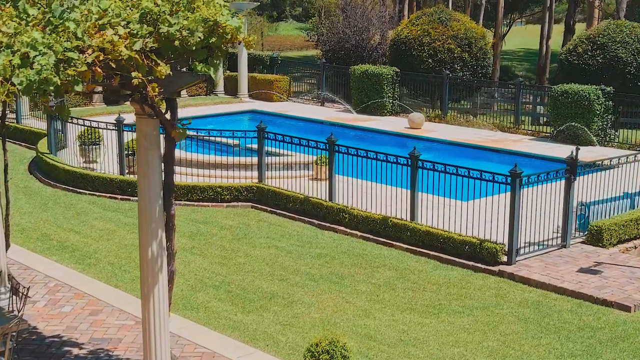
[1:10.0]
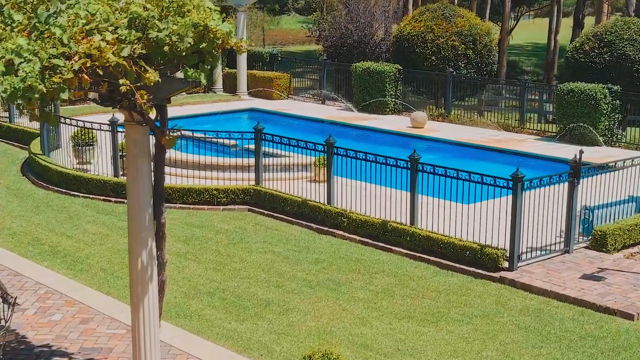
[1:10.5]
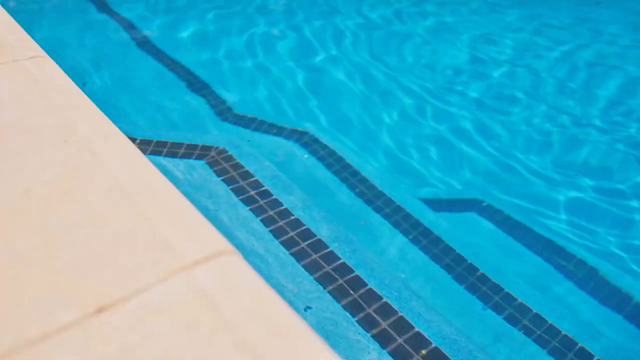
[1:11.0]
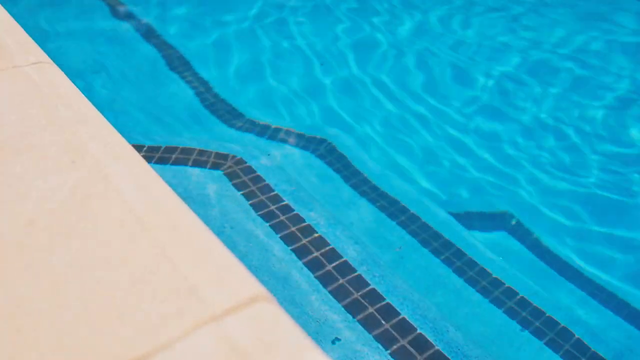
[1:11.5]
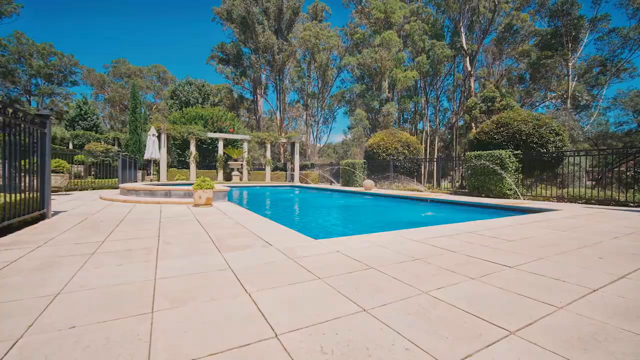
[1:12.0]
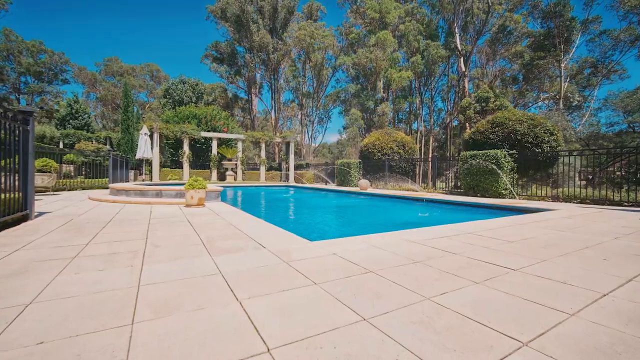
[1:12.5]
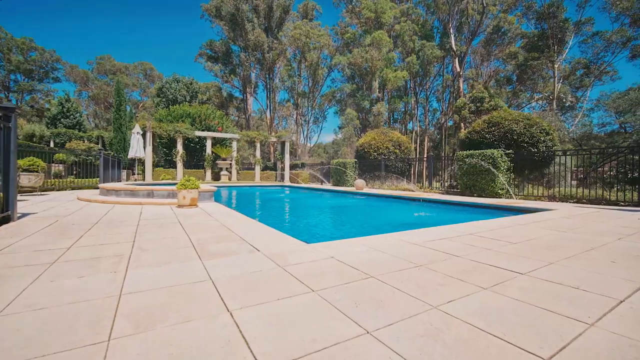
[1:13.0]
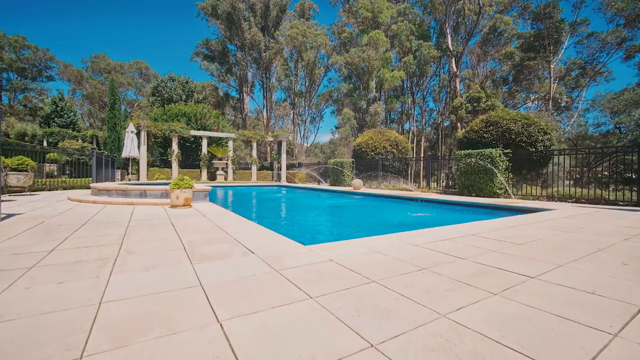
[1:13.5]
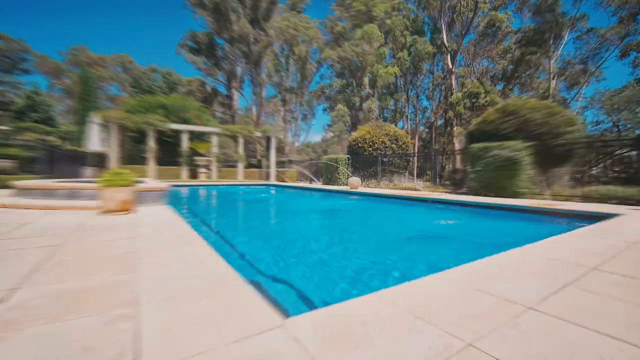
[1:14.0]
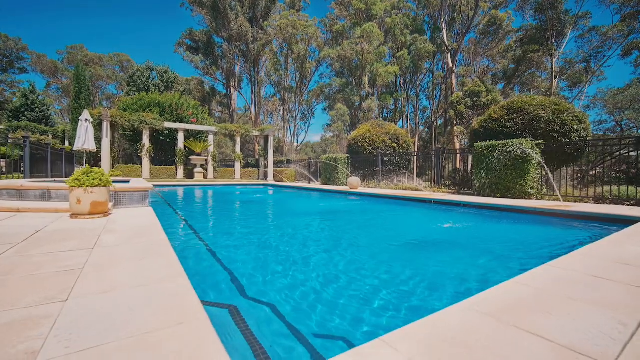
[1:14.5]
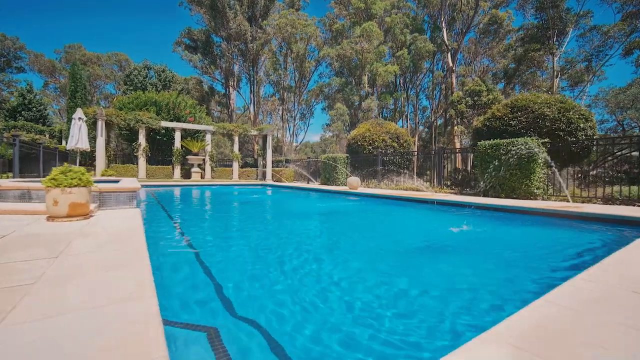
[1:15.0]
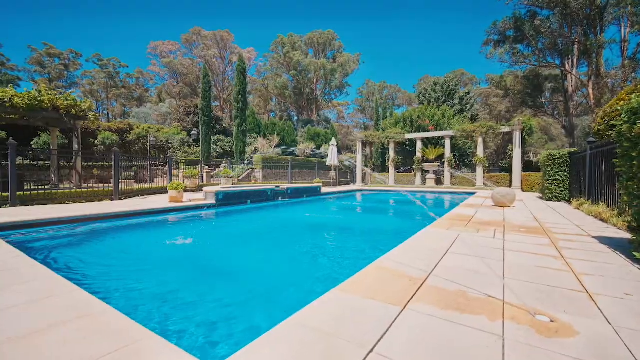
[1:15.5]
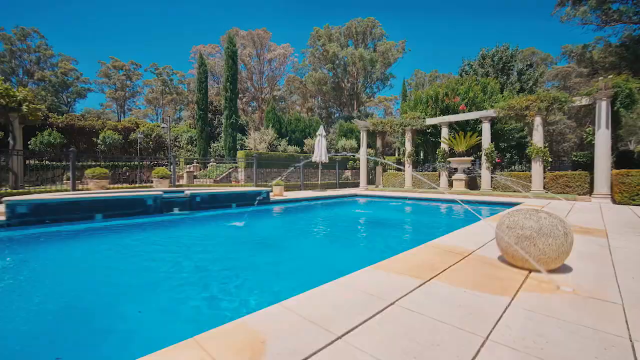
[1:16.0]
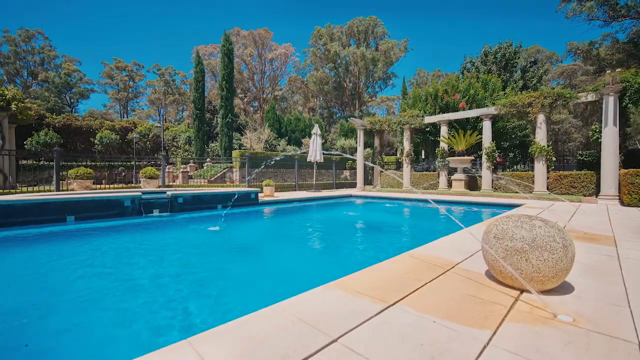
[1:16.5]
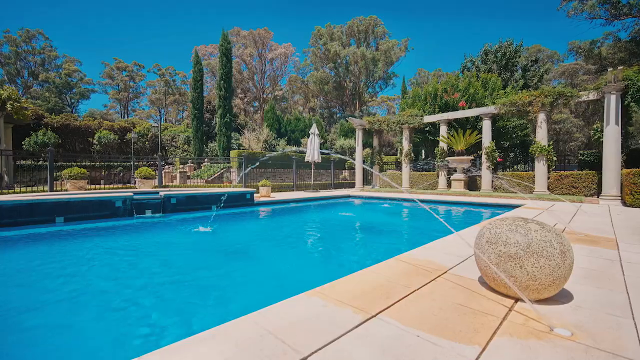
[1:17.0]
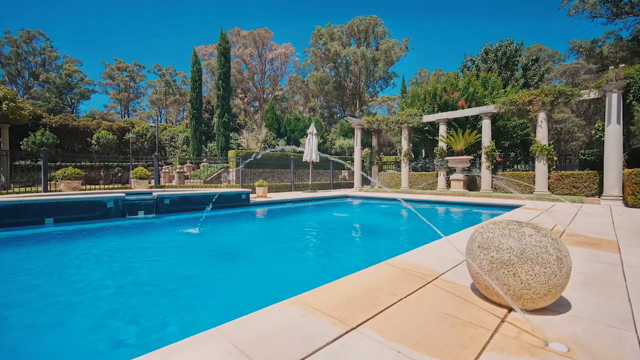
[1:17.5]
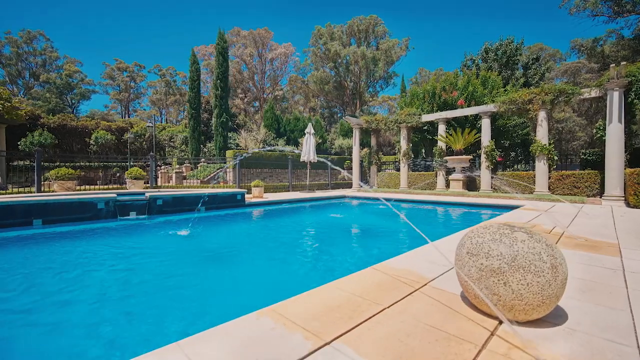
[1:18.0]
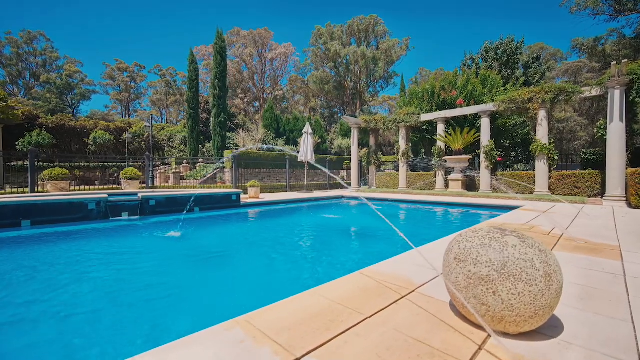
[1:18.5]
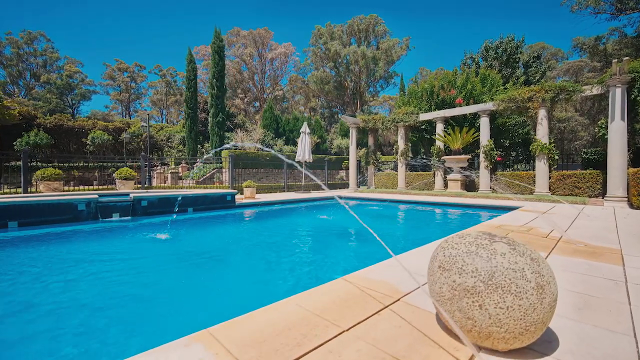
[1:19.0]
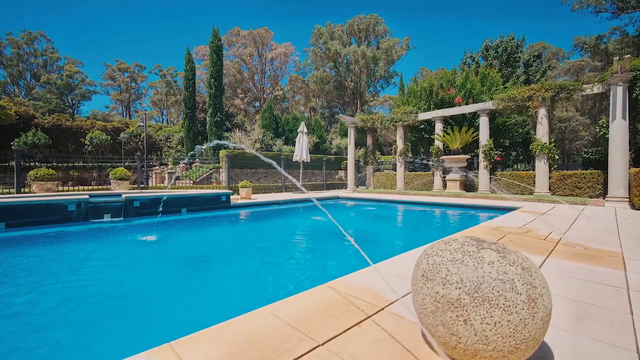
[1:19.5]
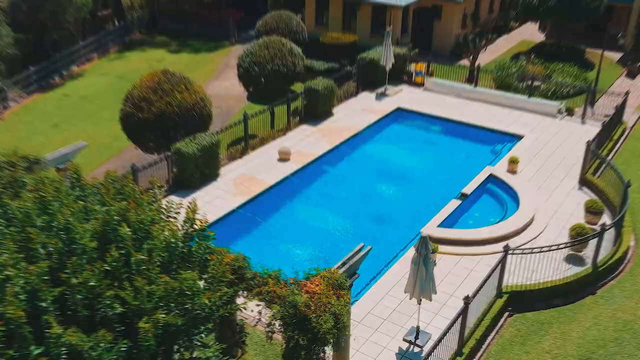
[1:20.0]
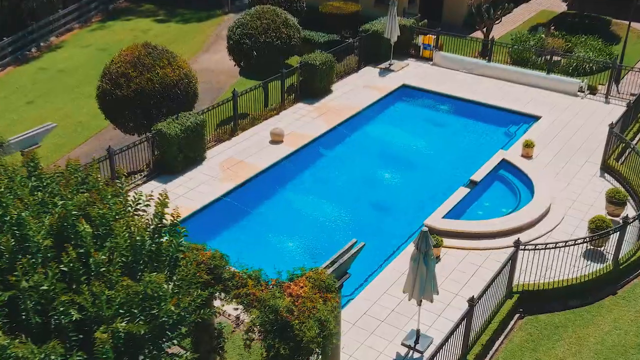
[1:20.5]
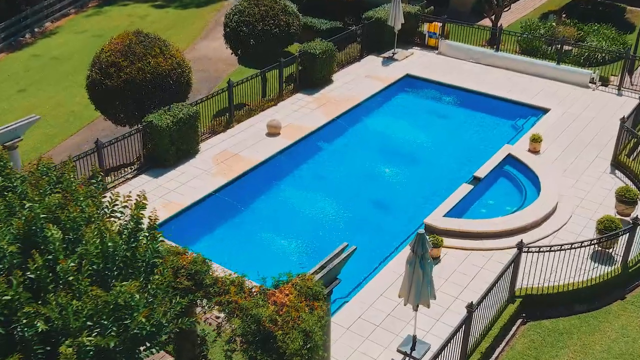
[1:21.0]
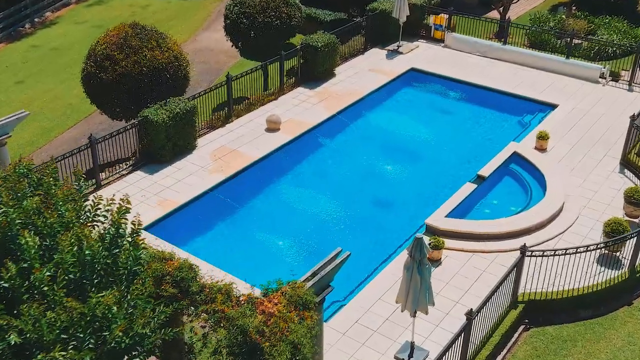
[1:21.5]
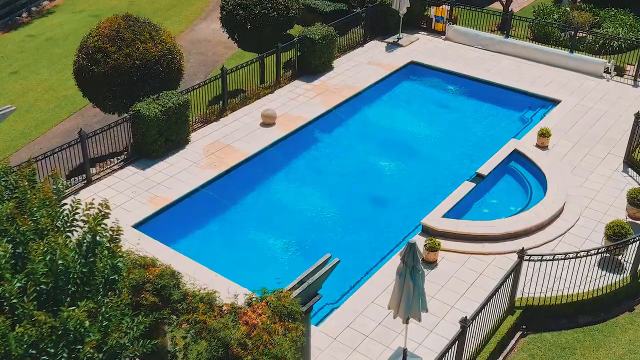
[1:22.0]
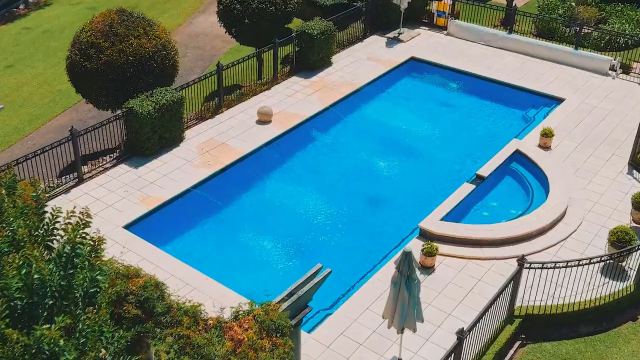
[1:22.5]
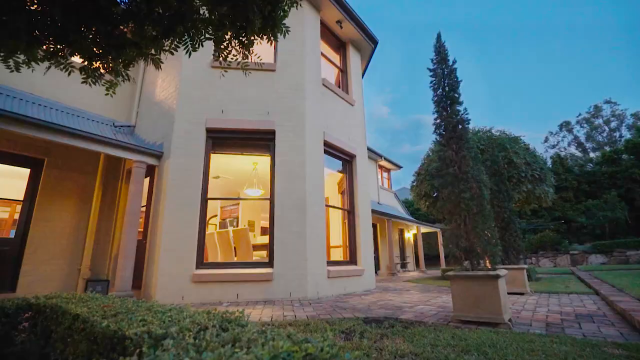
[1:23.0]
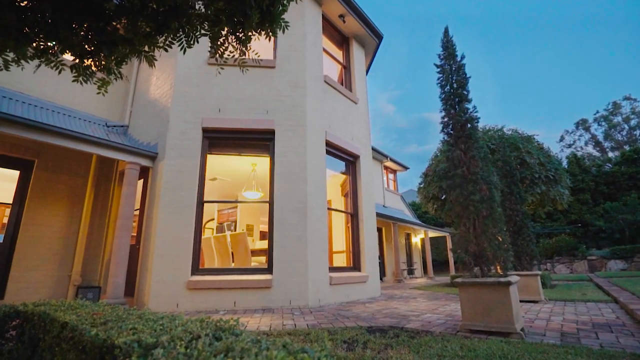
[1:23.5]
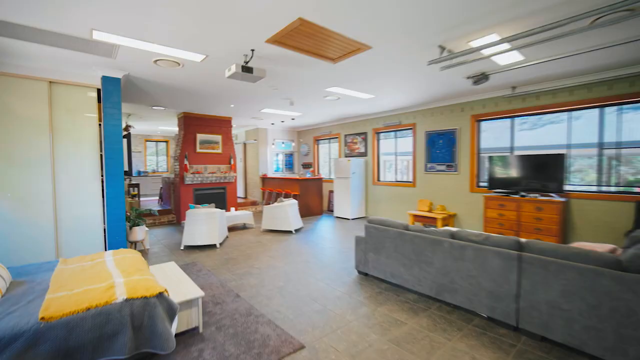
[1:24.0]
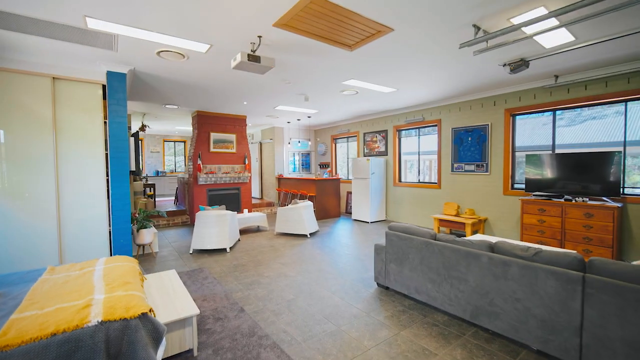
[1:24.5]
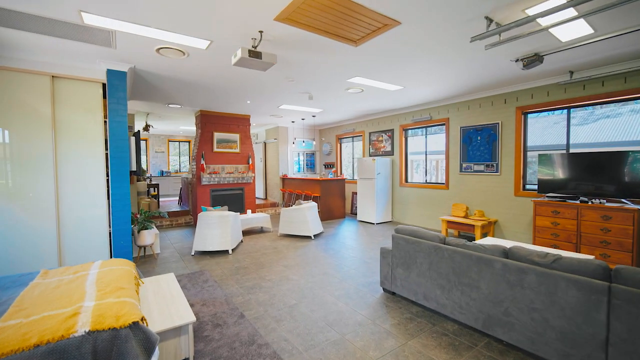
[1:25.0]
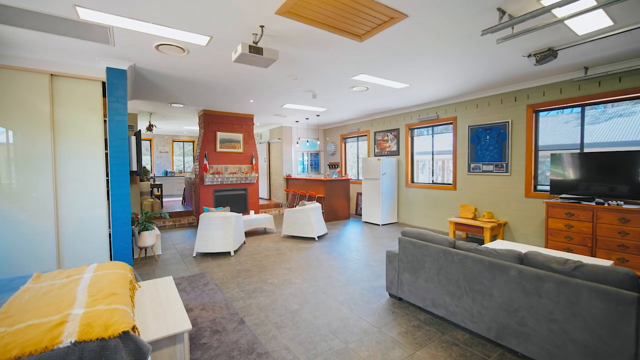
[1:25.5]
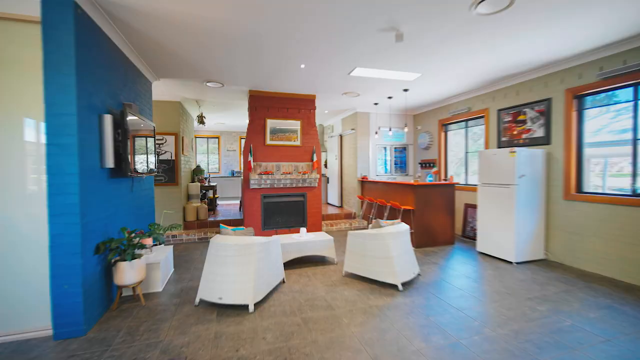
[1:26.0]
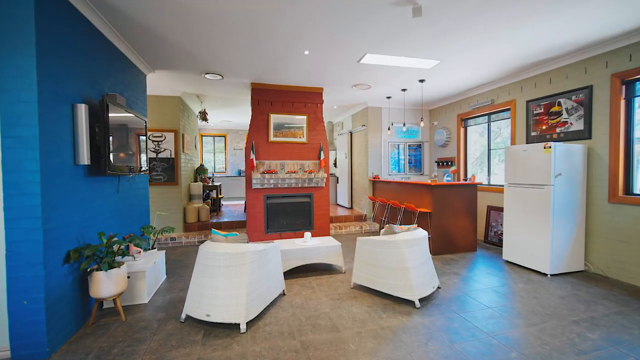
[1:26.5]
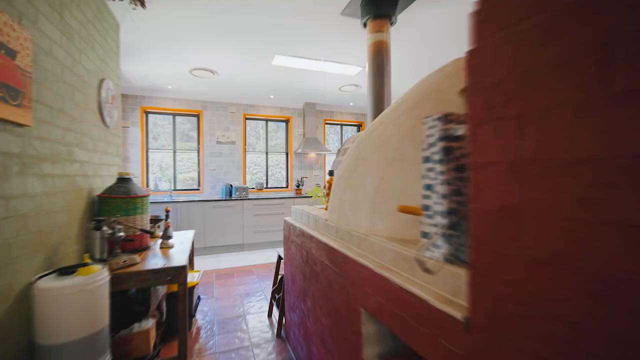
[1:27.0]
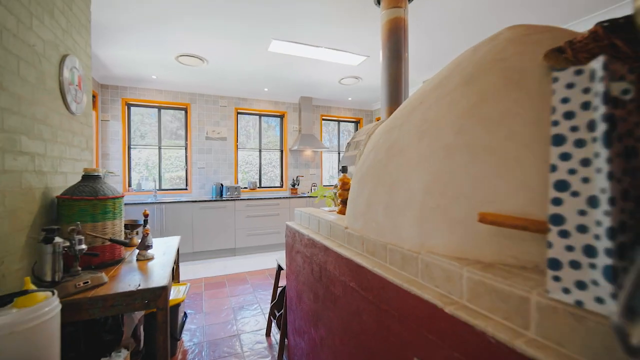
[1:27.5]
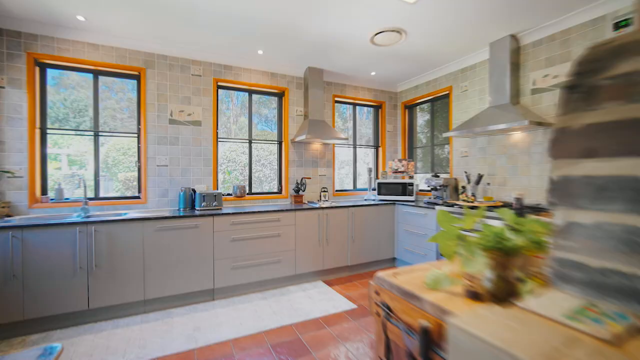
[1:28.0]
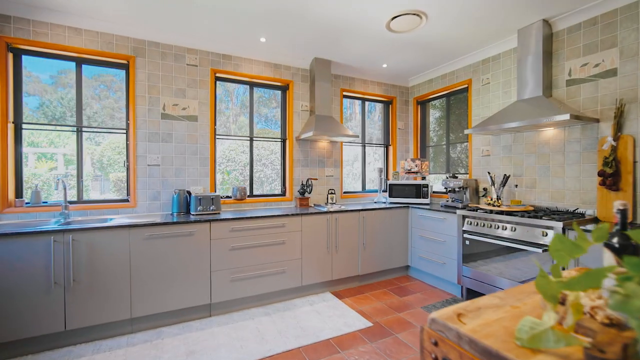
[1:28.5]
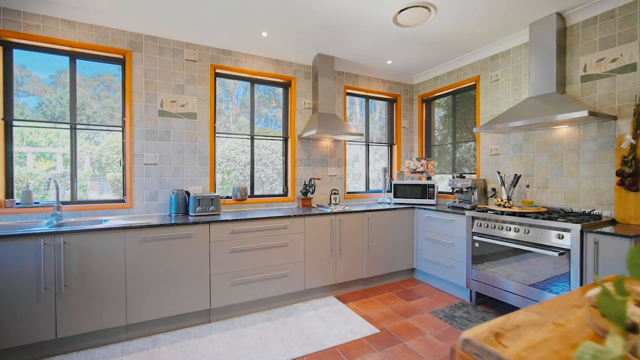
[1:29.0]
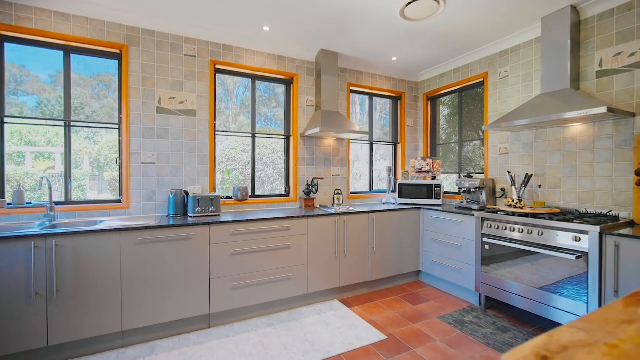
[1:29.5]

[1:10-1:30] A couple of shots begin with the rectangular pool. Right next to it is a small pool, either a hot tub or a baby pool. Small water fountains run into the pool along the long side without the small pool, apparently about four of them. Next, what appears to be a kitchen is shown, with a mostly modern feel and a hint of Europe. Two Italian flags are on the side of the fireplace, and the fireplace itself is very old-school. It is possibly a basement kitchen or extra guest room, since the same space contains a bed, a couch and a TV: there is the kitchen, the fireplace, a refrigerator, a living room space and a small bedroom space. The kitchen is modern and clean with a bit of a rustic feel.